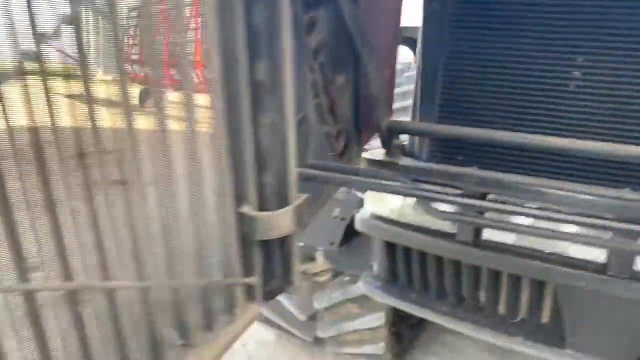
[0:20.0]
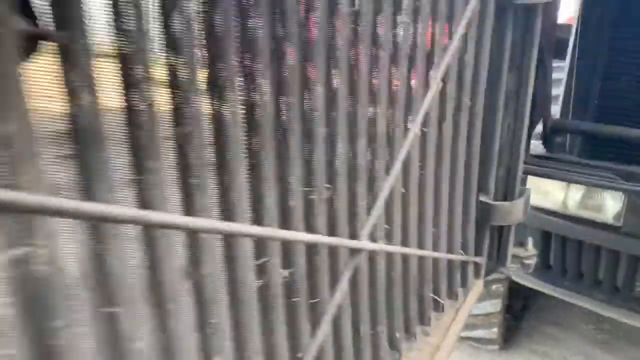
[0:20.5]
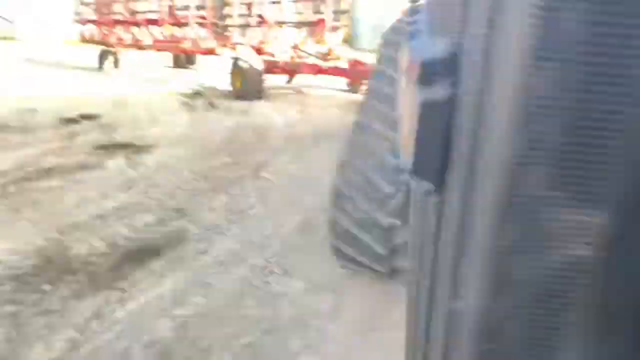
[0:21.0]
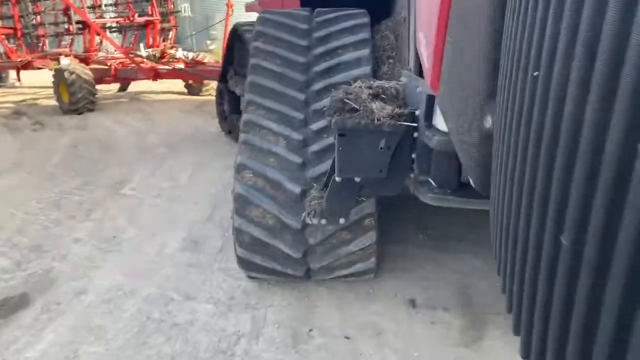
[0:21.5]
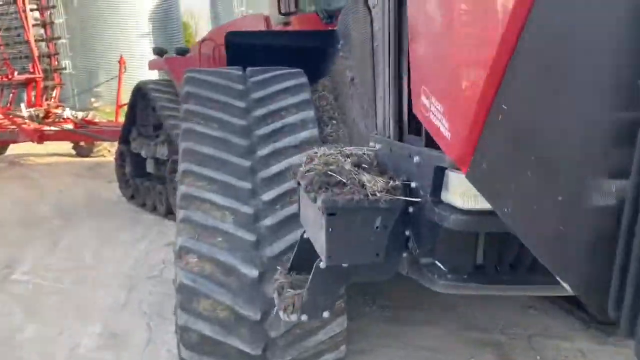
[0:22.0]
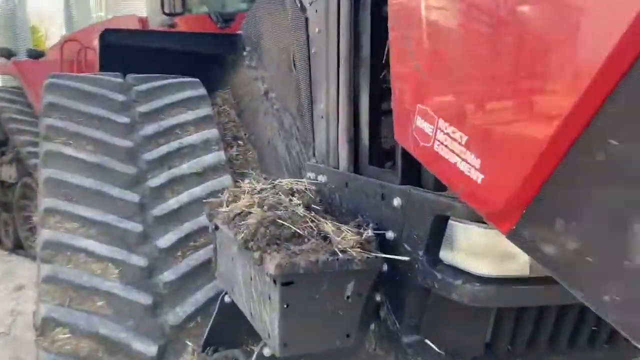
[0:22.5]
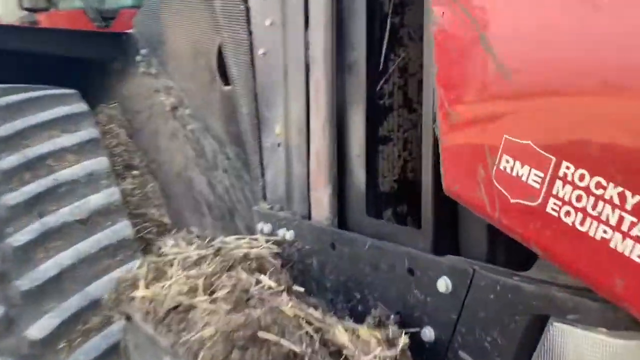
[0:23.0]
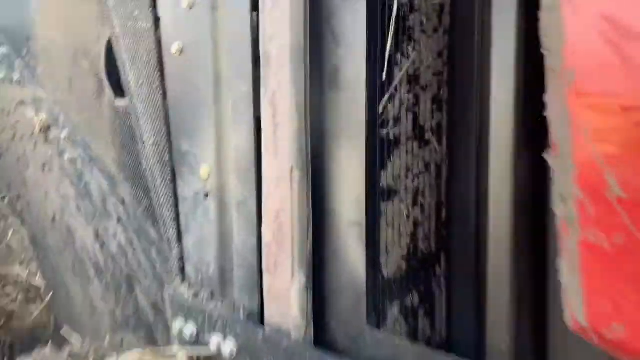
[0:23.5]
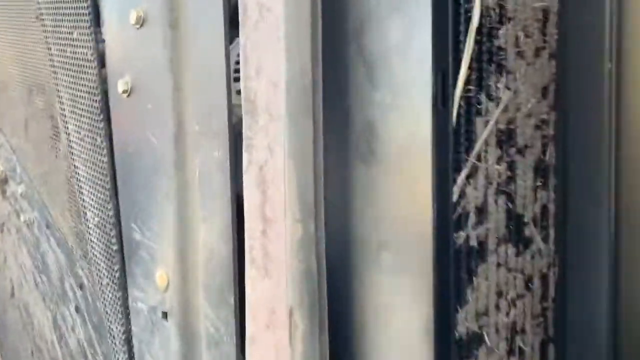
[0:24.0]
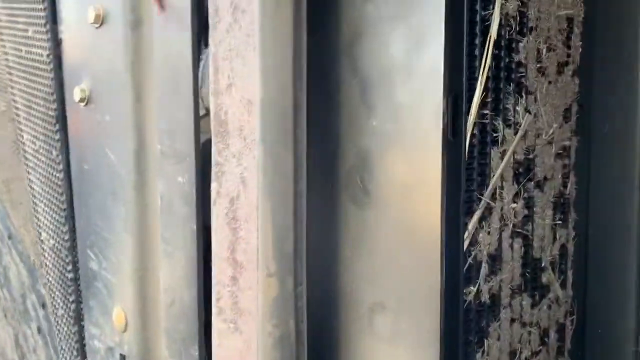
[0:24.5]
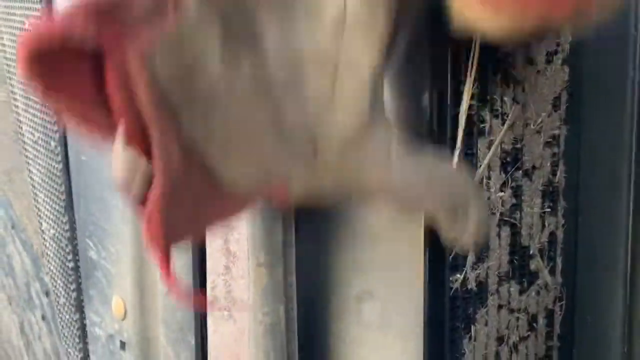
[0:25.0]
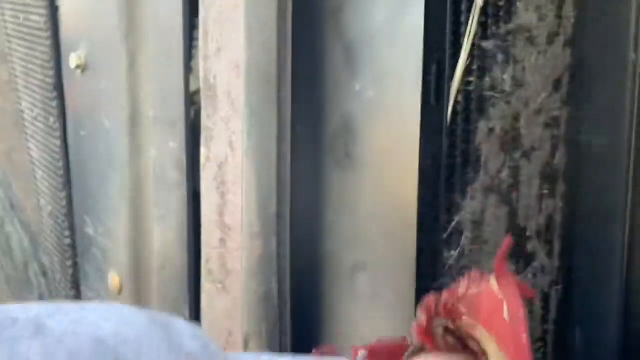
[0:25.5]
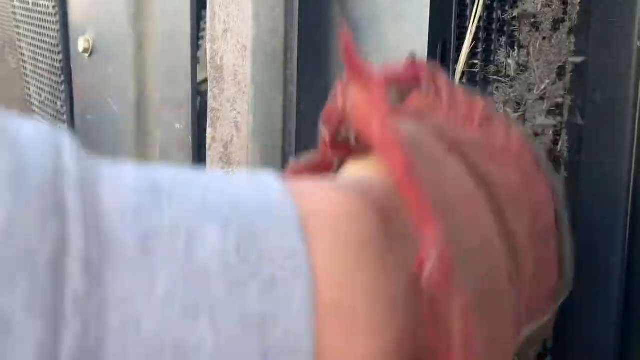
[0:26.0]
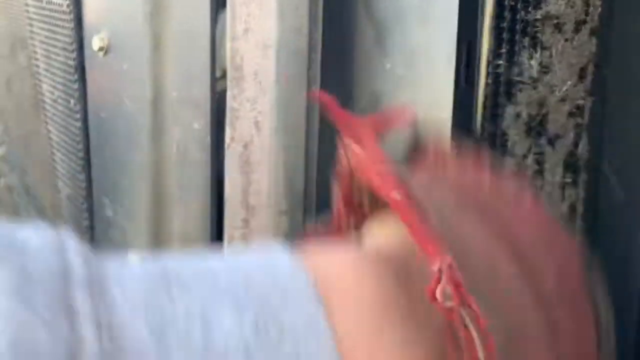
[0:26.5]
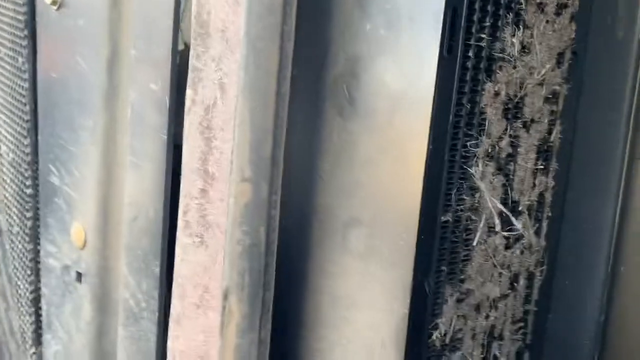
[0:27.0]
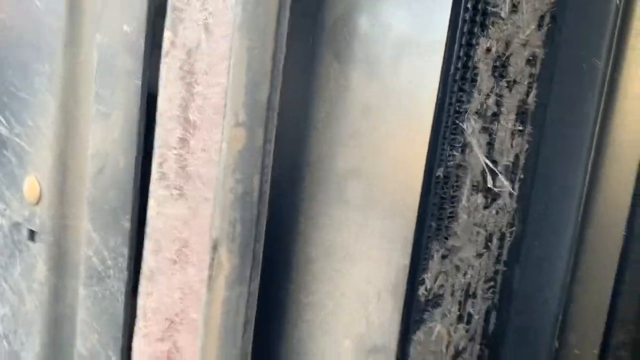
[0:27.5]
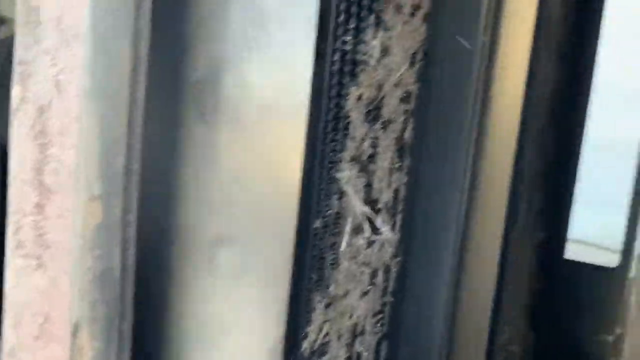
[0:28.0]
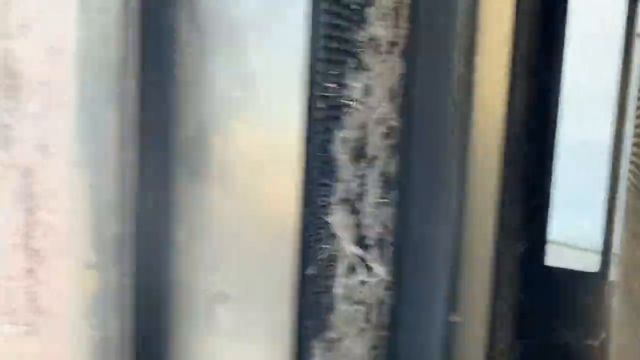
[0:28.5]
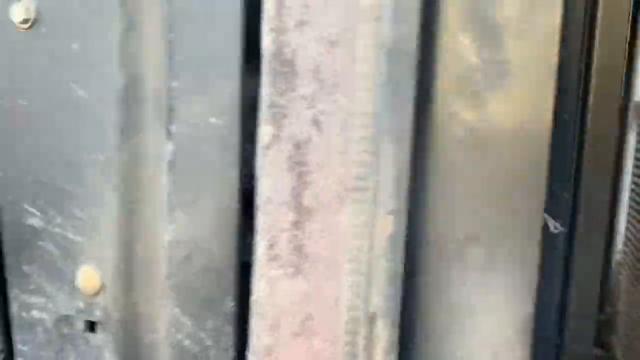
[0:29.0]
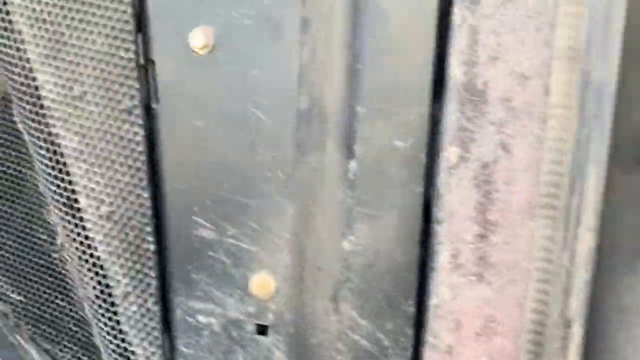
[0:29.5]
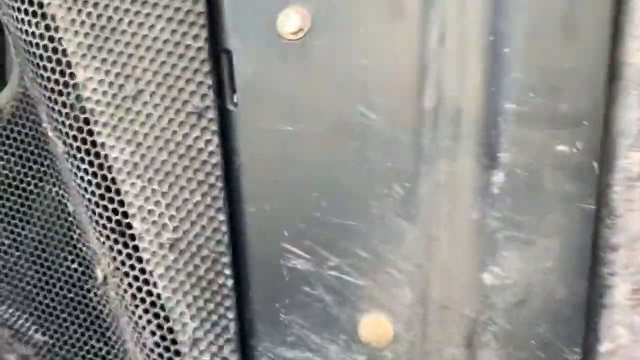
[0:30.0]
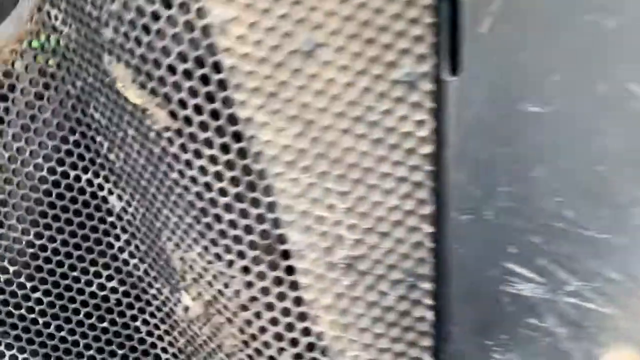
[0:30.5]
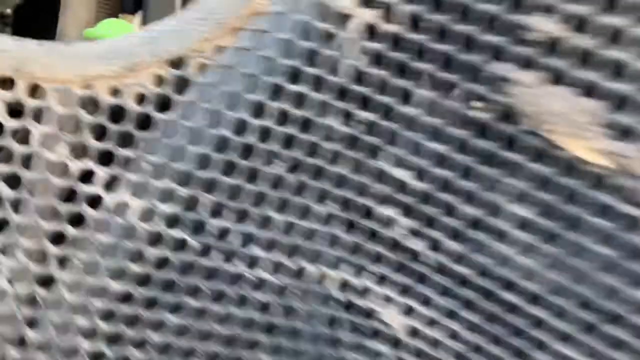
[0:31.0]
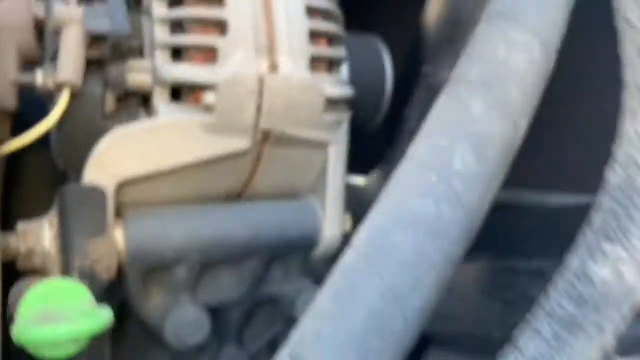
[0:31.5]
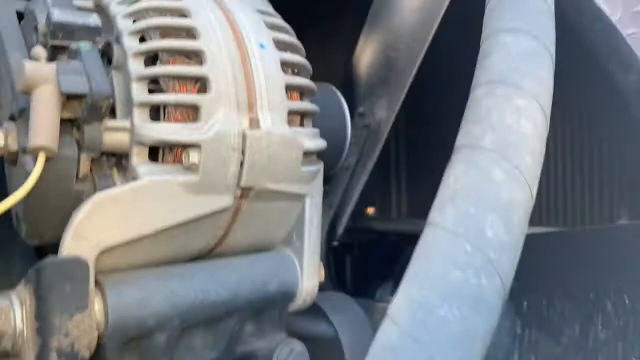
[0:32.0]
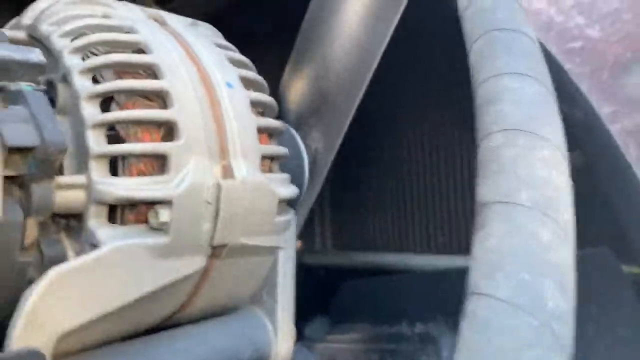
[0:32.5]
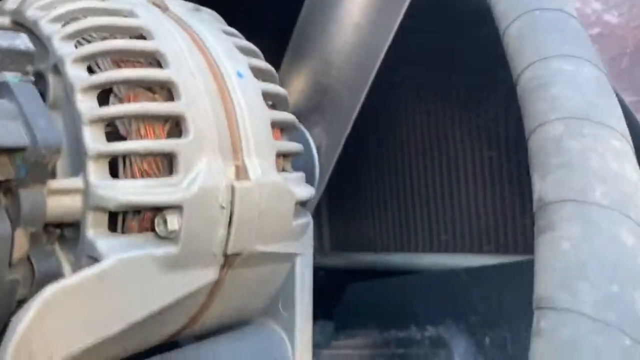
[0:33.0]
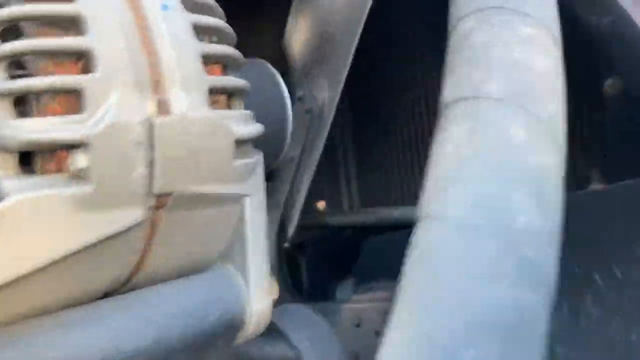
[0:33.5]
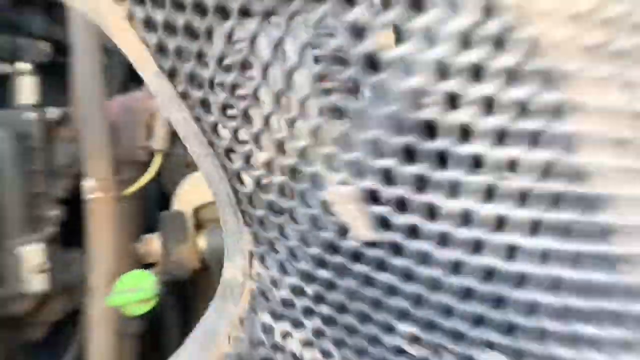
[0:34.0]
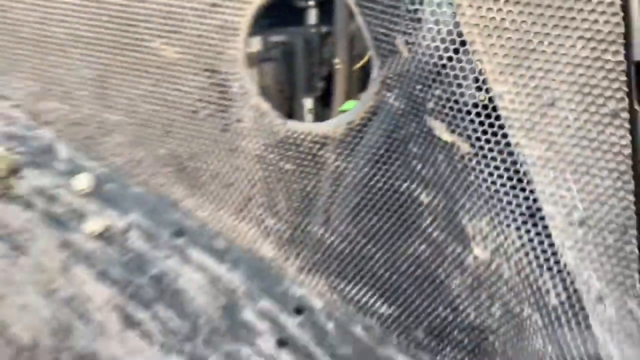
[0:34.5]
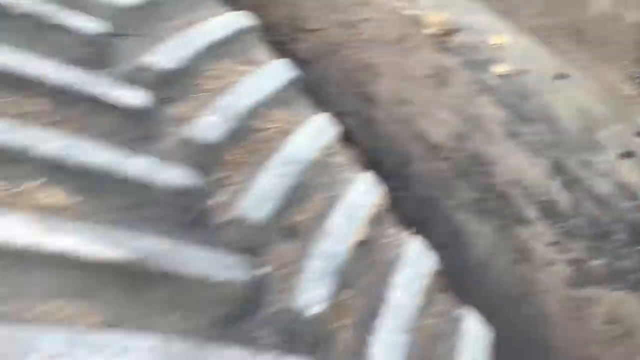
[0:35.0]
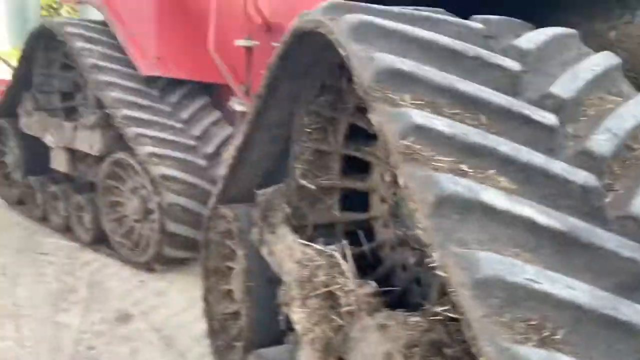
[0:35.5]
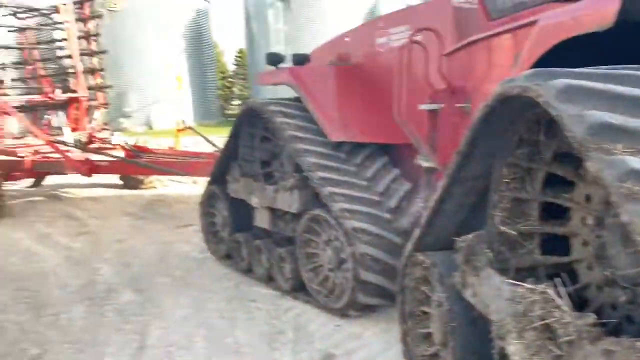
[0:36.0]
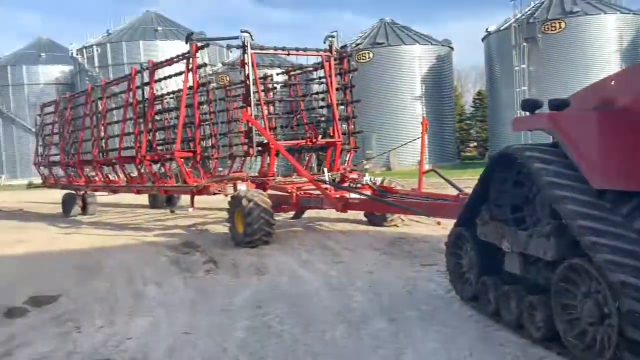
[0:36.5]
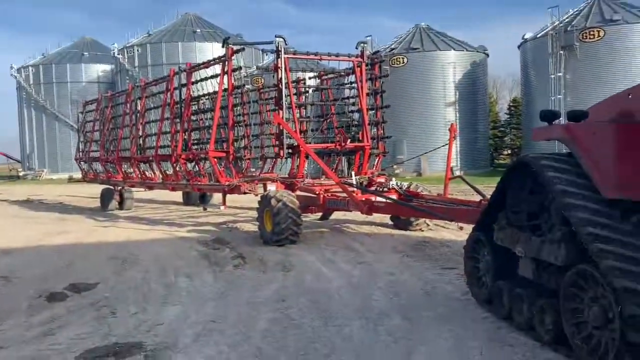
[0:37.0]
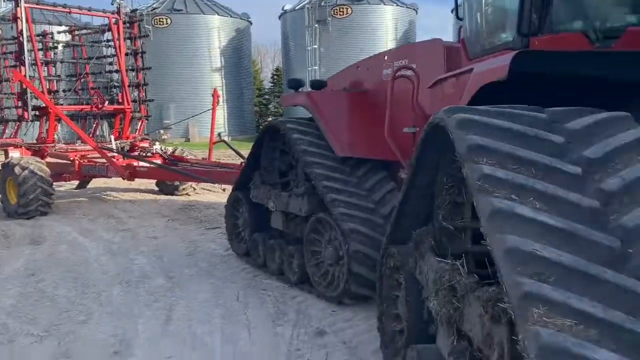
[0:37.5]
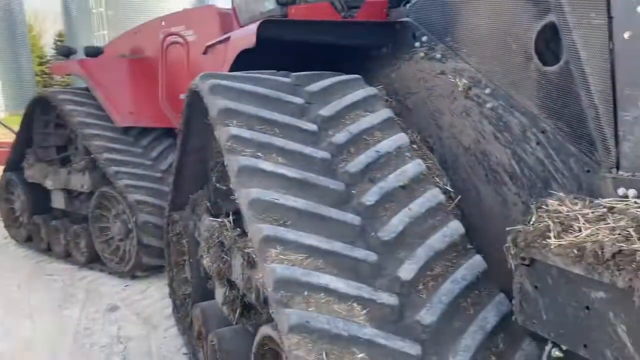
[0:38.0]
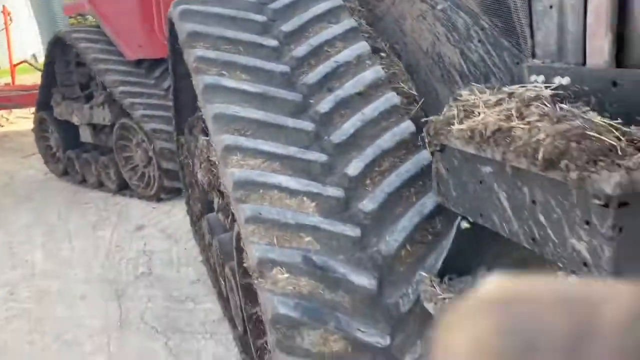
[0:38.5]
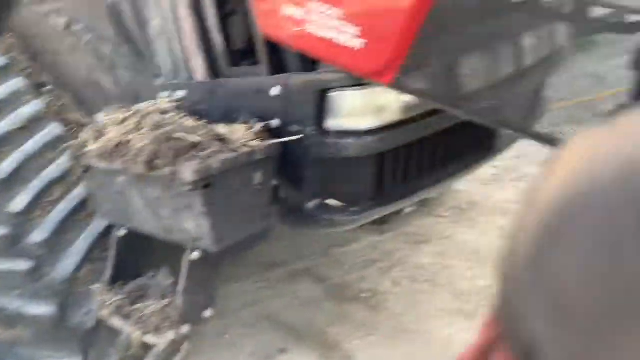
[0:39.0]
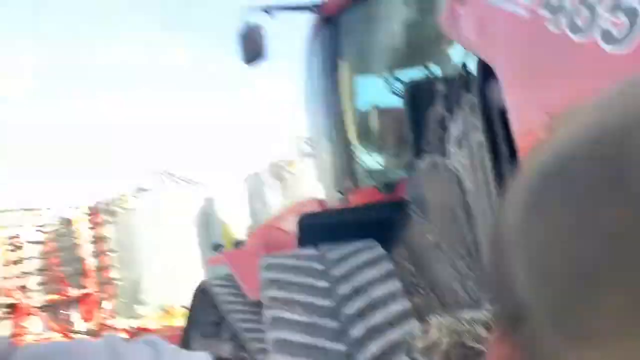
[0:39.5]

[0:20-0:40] The person backs away, showing what looks like the right side of the tractor. On the side of the door, or the propped-up front part of the tractor, white writing reads "Rocky Mountain Equipment", which looks like the brand of the tractor. The view zooms in on a section of the tractor that looks dirty, like the filter, with pieces of grass on it. The view then goes to the left side, showing the tractor's alternator. The person backs out and makes a large turn to the left, revealing a big trailer on wheels with large black and red beams, which looks connected to the back of the tractor. The view then goes to the right, showing the head and face of a man.